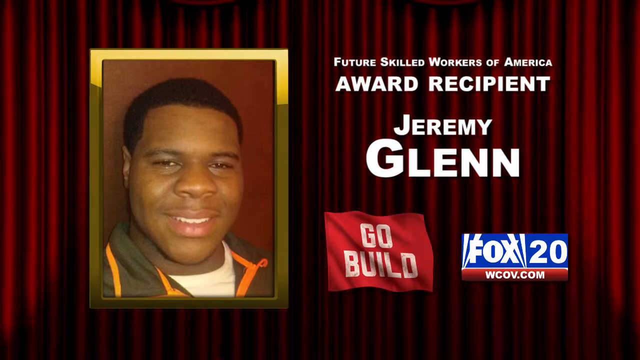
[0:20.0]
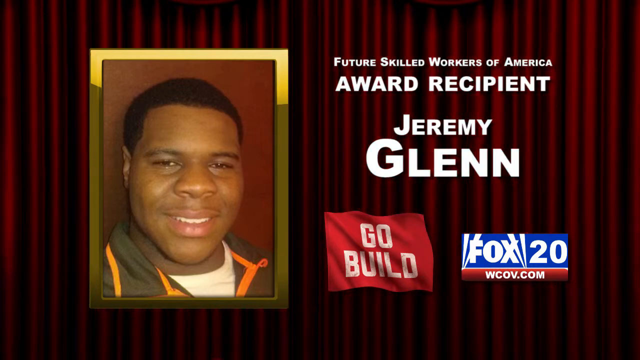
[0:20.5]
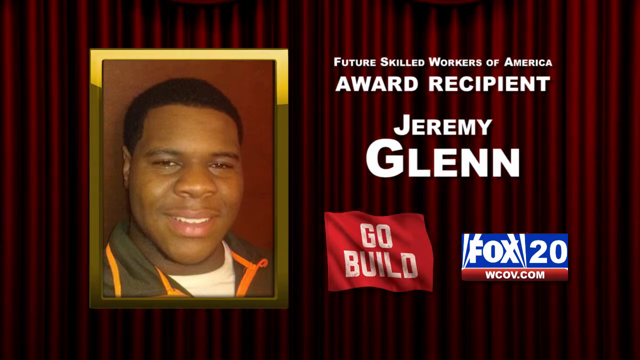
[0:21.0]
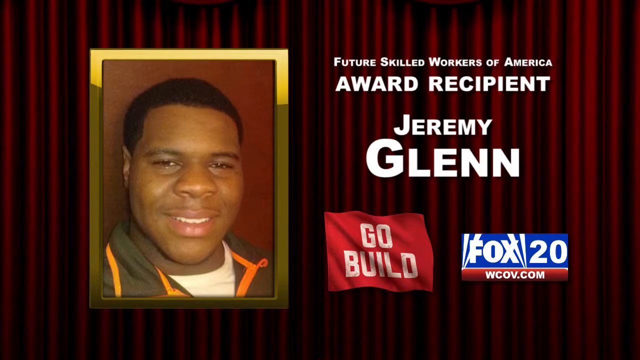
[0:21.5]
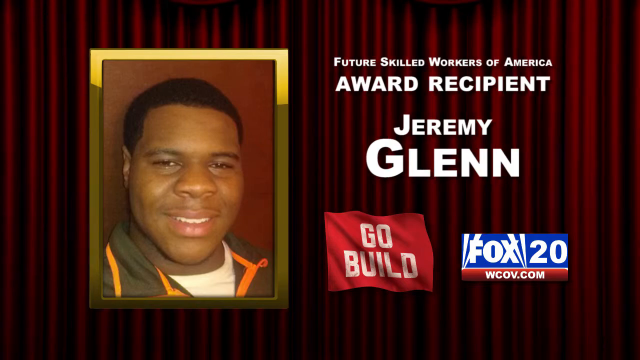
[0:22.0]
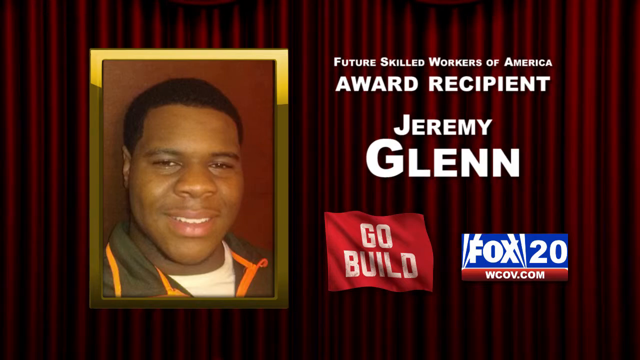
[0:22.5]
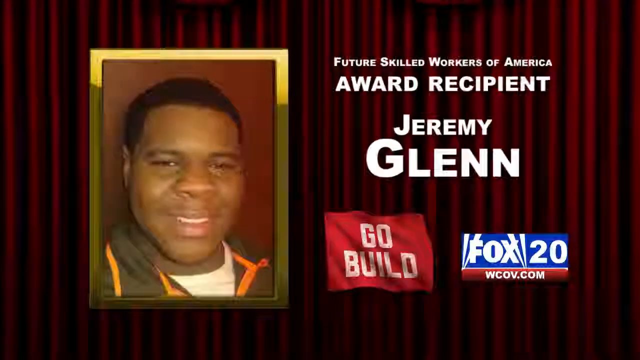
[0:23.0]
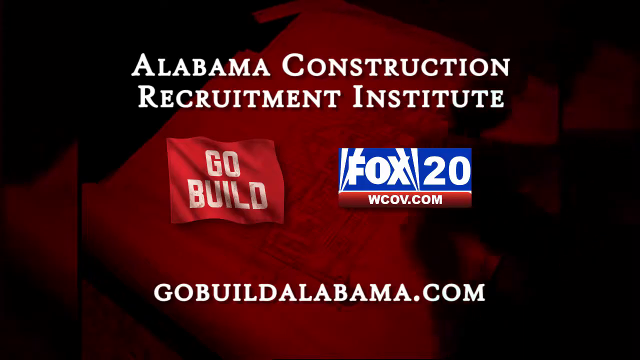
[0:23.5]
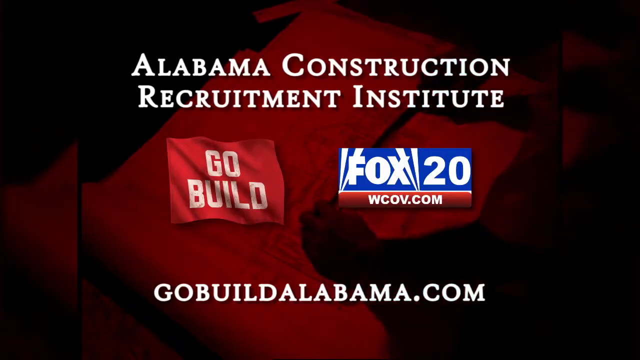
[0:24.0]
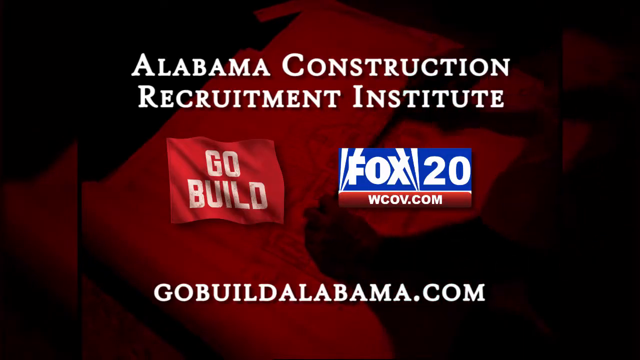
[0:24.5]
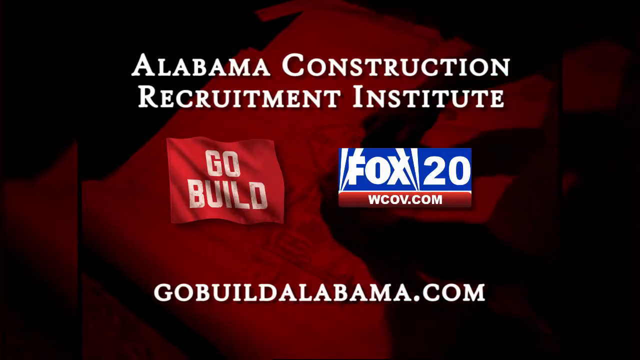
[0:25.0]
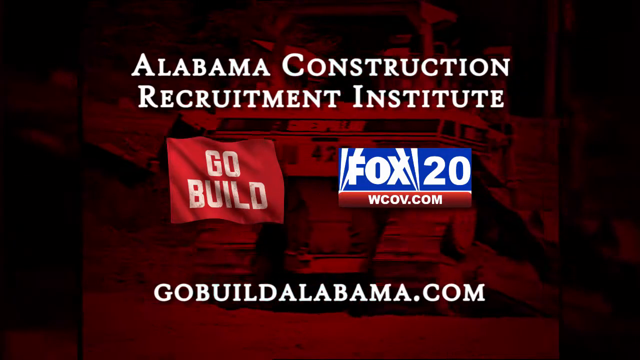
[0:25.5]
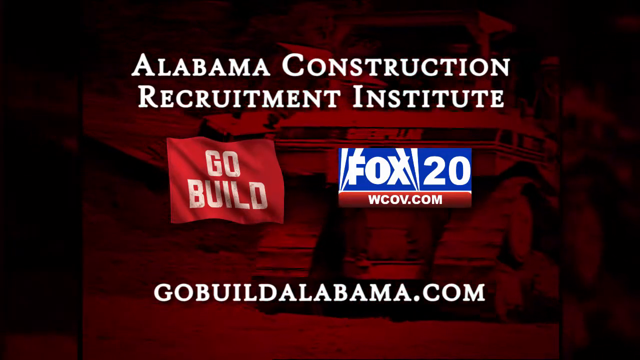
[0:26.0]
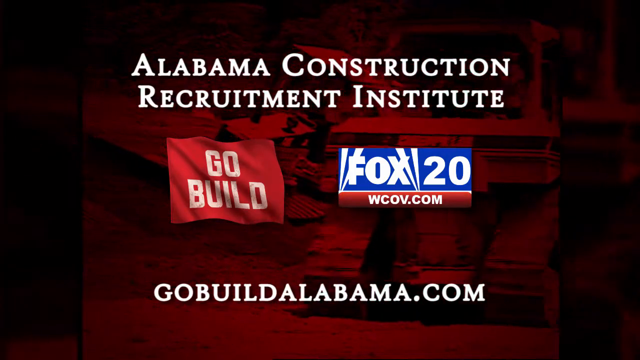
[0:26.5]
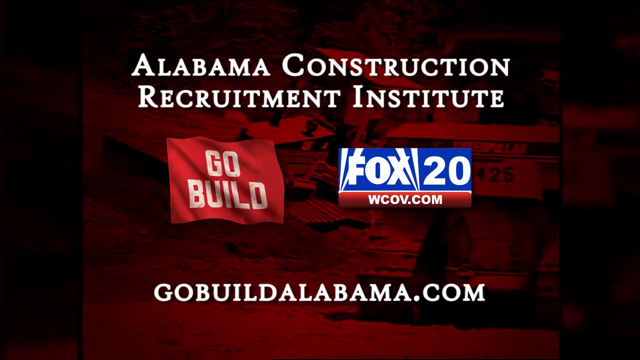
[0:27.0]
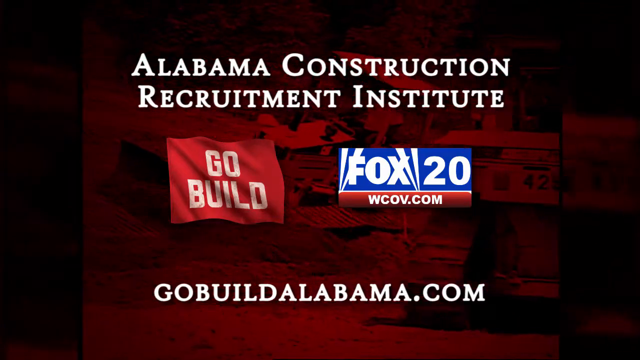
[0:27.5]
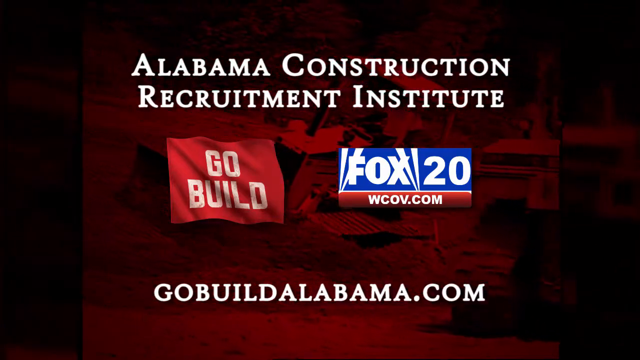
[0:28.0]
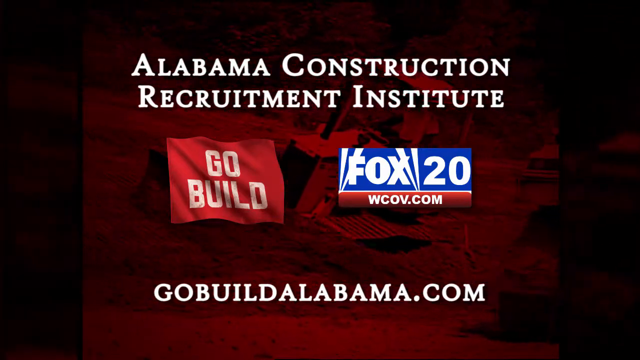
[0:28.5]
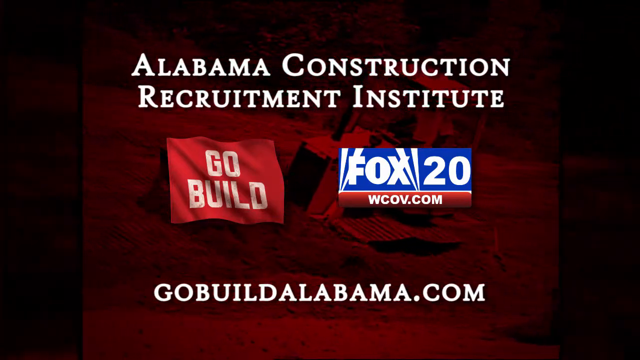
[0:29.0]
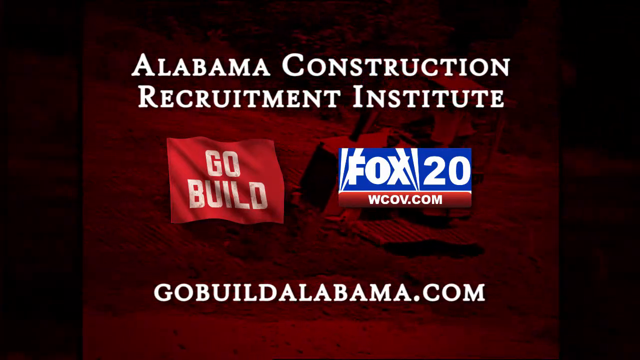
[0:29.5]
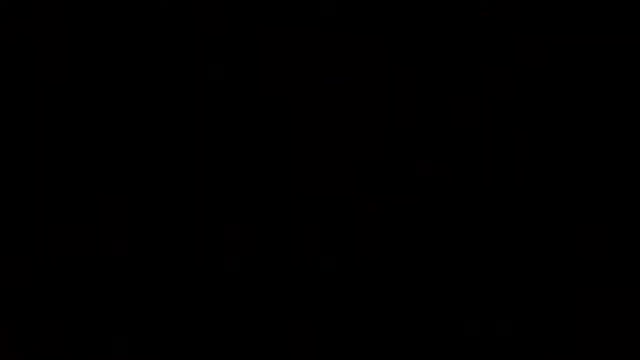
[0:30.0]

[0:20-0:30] The award recipient Jeremy Glenn remains on the screen. The video then returns to the Alabama Construction League, Recruitment Institute screen, which shows Go Build, Fox 20, information about NECA, and the URL for Go Build Alabama. This screen is not a solid background; some activity is visible behind the information, apparently people doing some type of construction work or equipment. The background is not very clear, but someone can be seen measuring something like a paper, along with a dump truck and some other device rolling, possibly wheels on a construction truck, rolling in the grass or dirt.